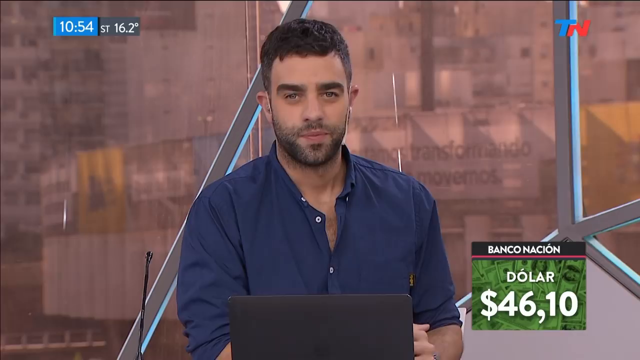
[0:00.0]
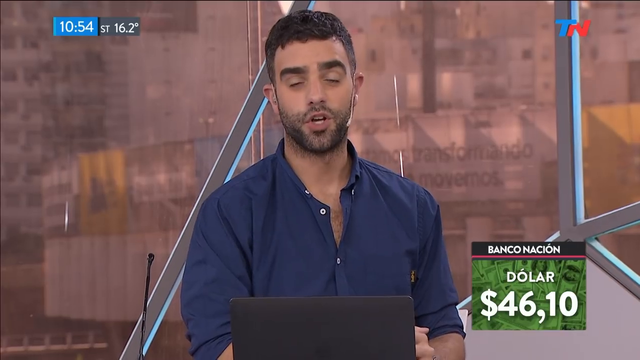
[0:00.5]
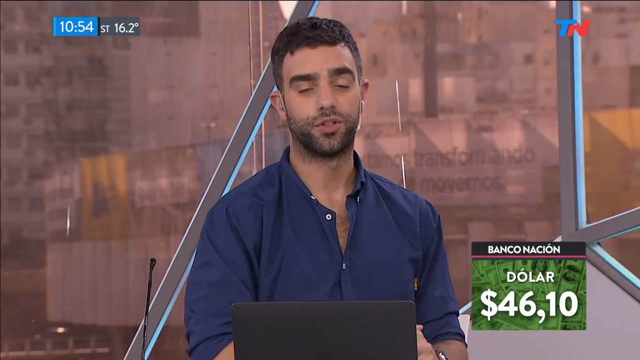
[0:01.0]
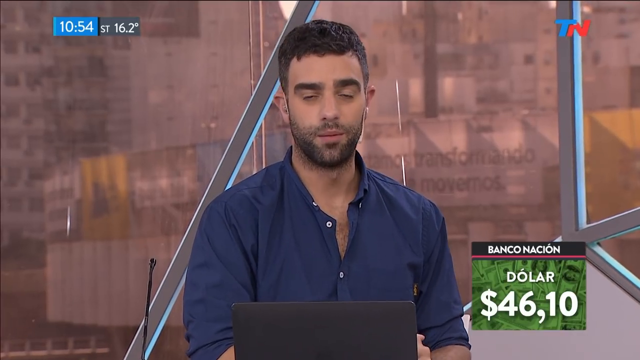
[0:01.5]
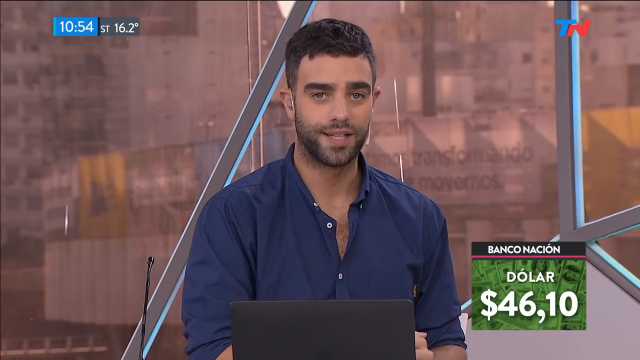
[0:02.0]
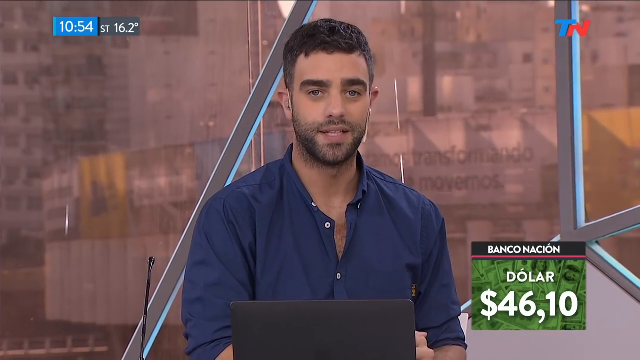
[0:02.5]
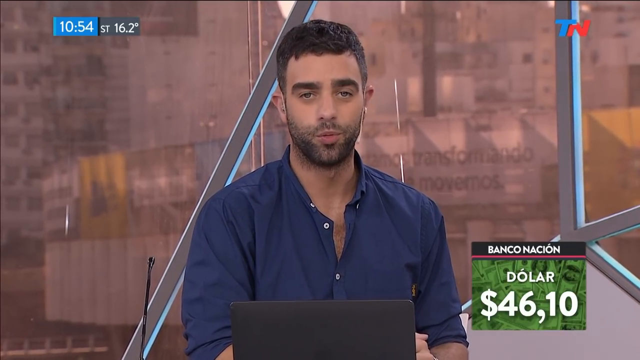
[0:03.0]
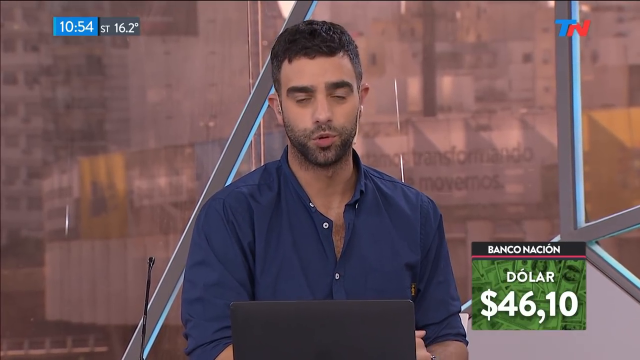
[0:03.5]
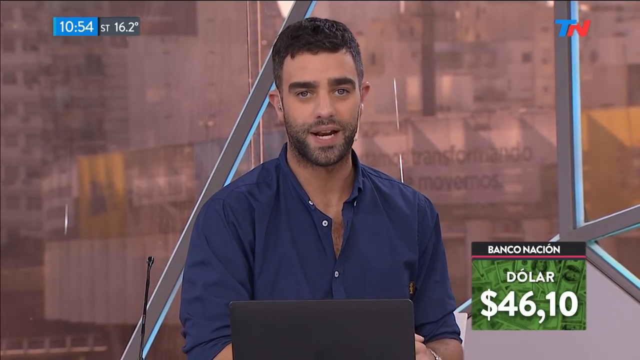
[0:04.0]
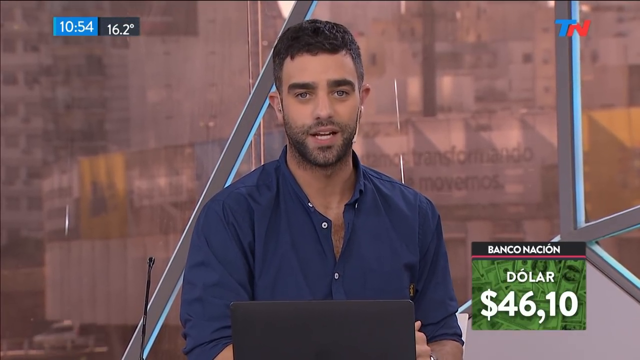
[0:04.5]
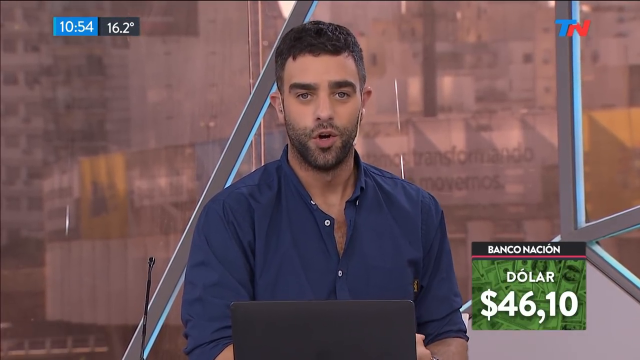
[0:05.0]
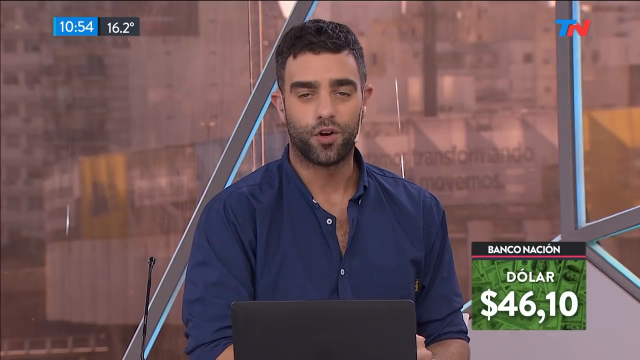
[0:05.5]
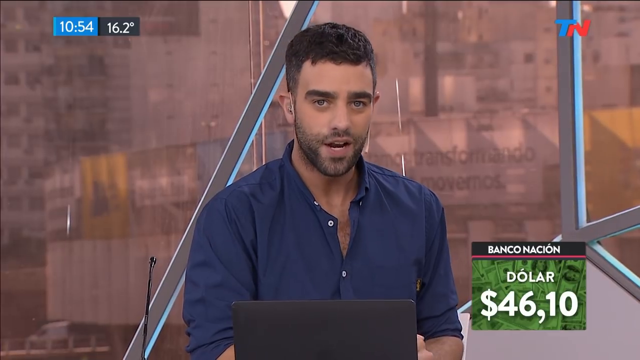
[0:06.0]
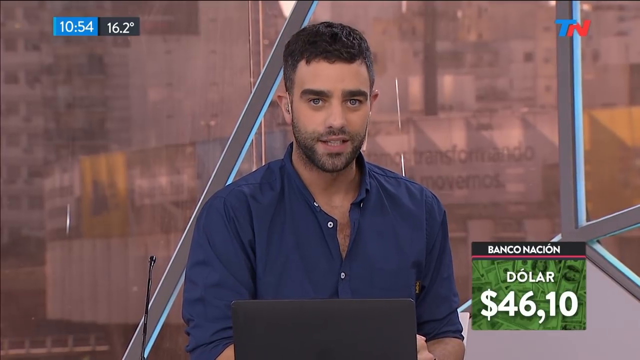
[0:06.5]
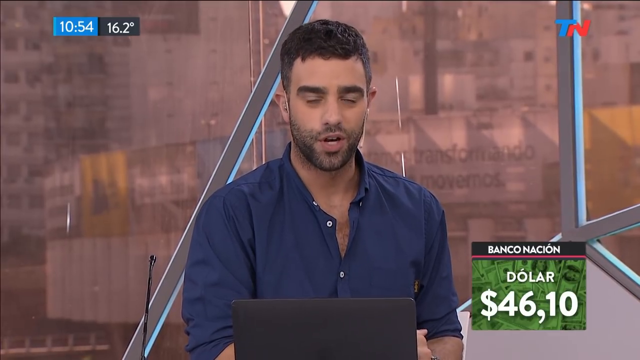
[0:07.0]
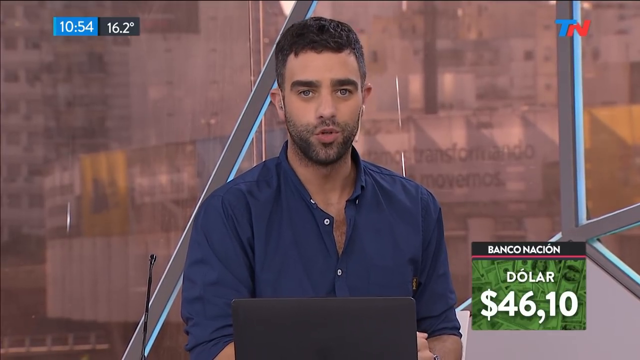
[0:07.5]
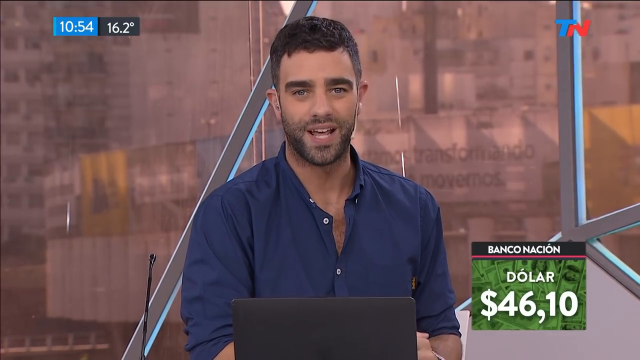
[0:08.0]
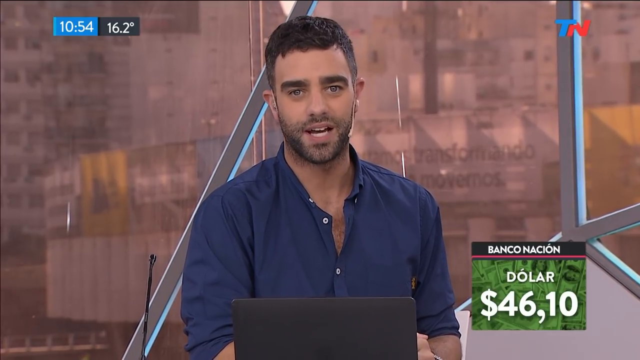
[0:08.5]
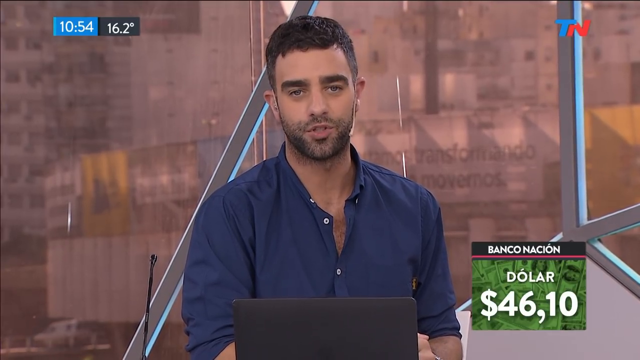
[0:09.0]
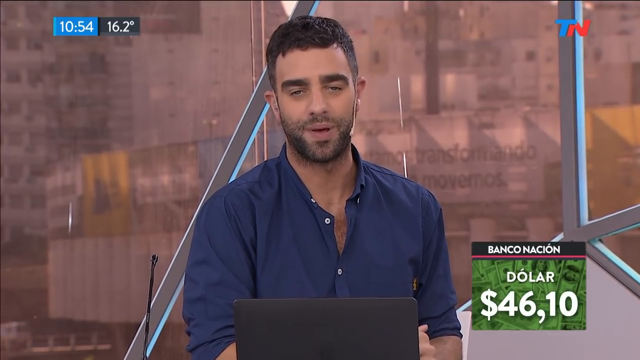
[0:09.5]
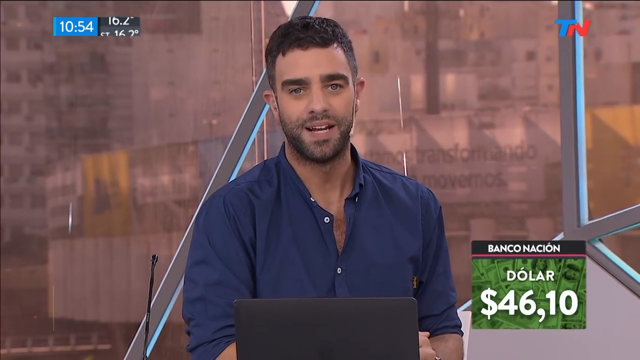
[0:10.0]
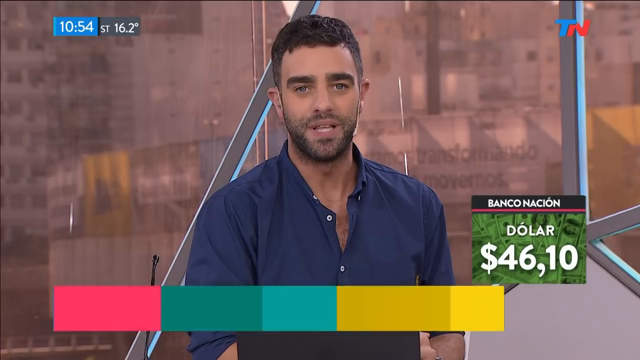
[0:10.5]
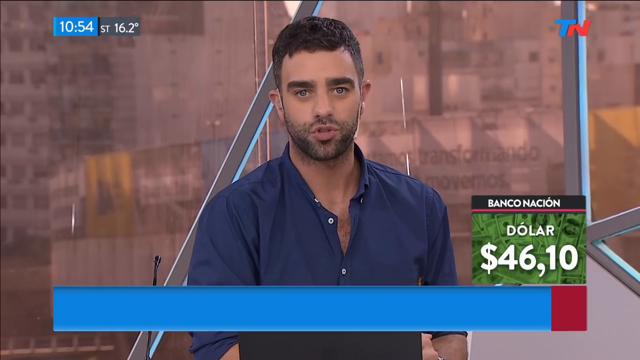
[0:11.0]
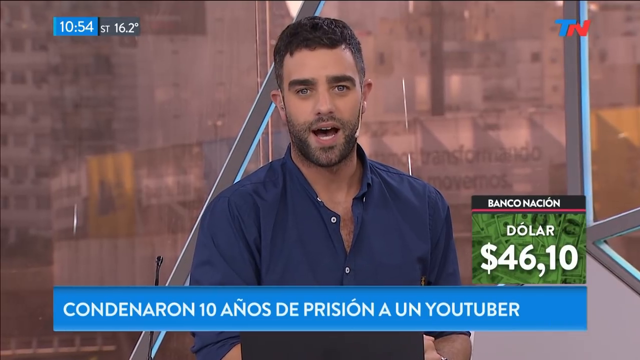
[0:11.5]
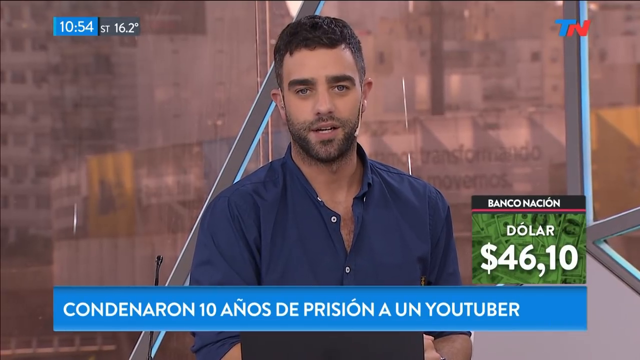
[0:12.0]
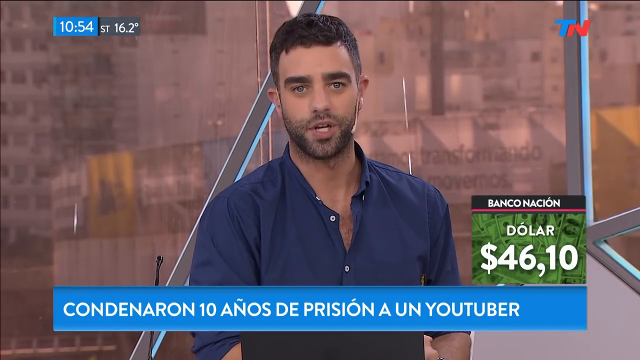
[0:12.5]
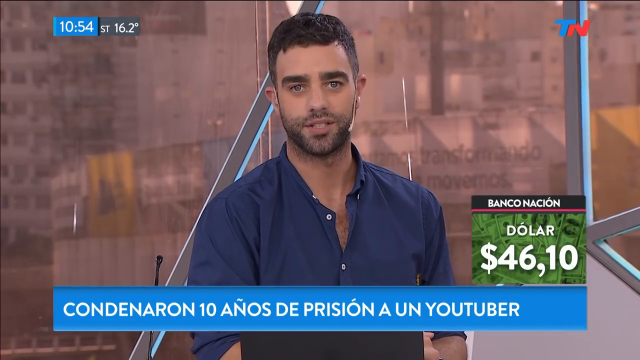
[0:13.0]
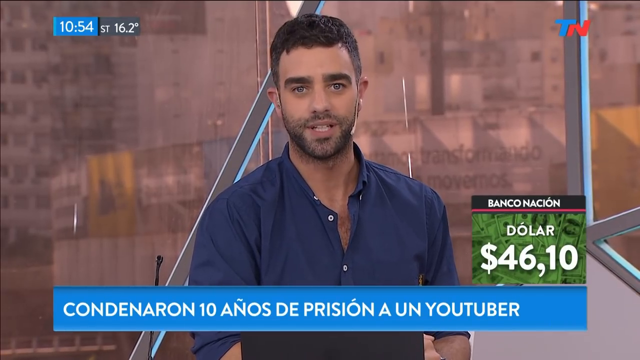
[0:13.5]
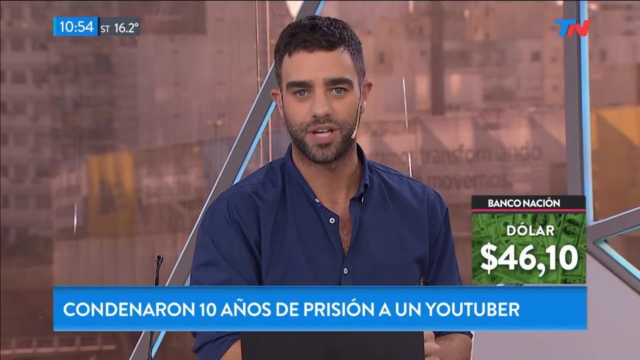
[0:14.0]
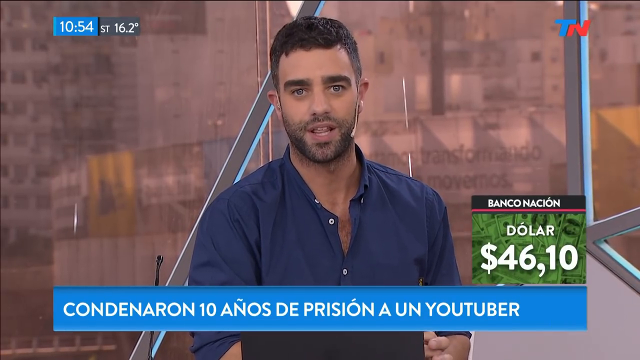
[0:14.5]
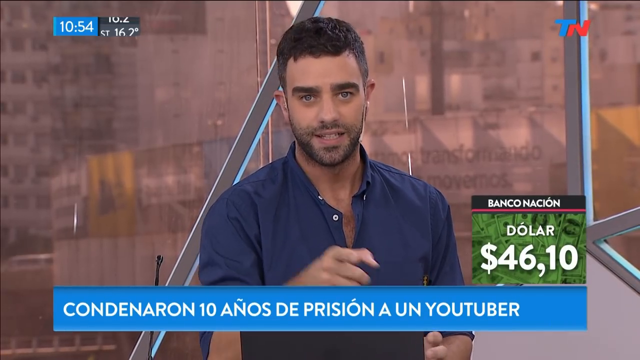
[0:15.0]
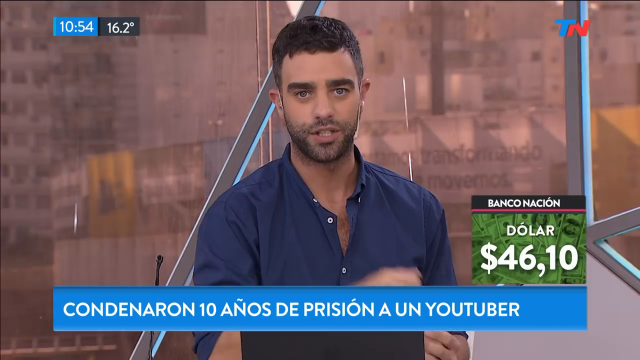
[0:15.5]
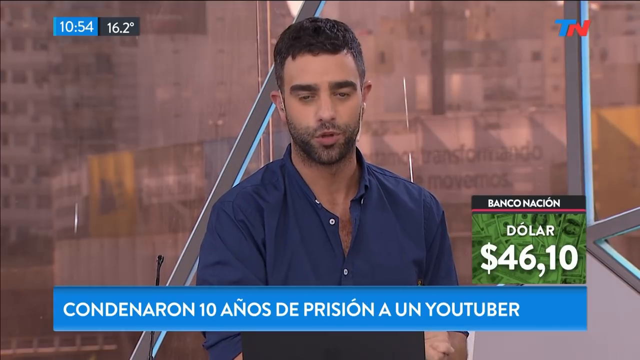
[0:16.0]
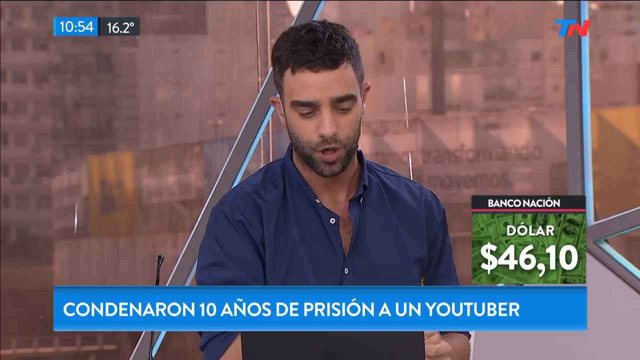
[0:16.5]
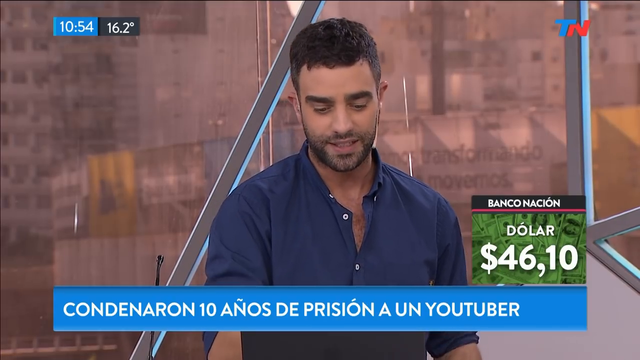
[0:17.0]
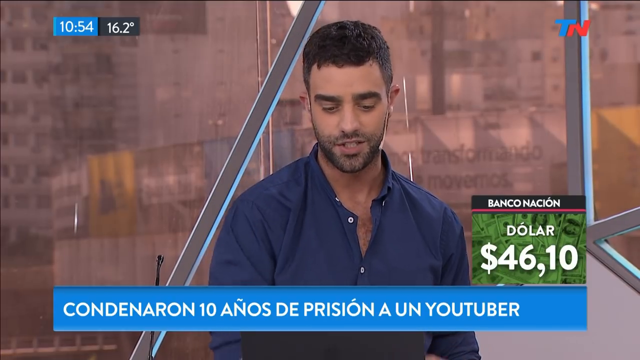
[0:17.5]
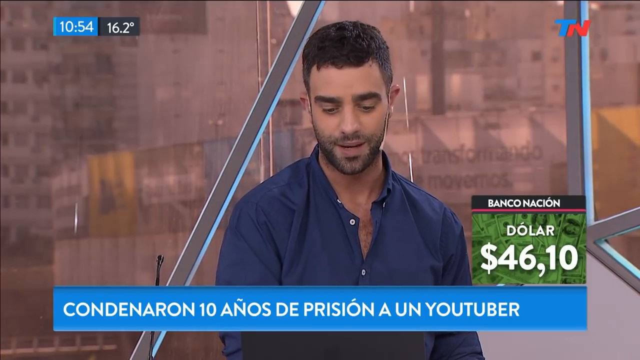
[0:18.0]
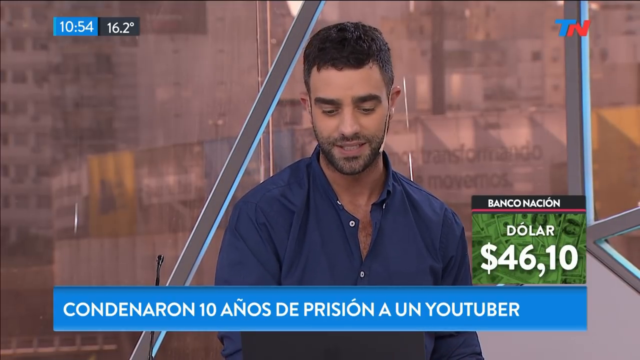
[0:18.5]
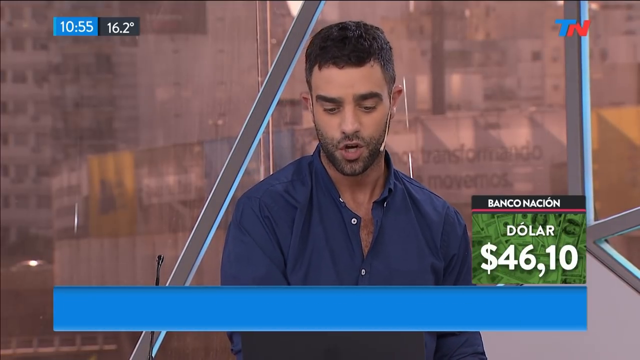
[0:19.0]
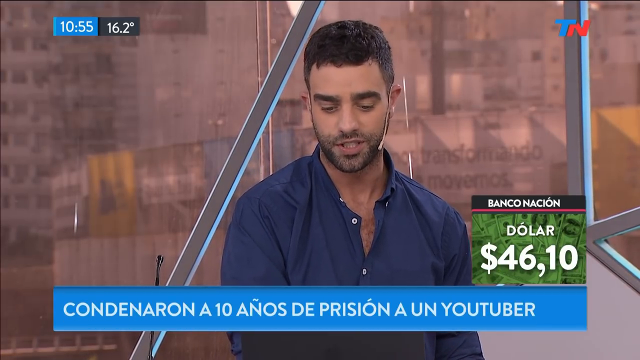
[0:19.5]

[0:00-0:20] A man appears on a news broadcast, sitting in a news studio and talking directly to the camera. He has short brown hair and a scruffy beard and mustache, and wears a dark blue button-up shirt with white buttons. A microphone wraps around his ear and comes around to the side of his cheek. He sits at a desk with a laptop open in front of him but looks directly at the camera as he talks. Behind him is a large window, and there appears to be a city scene outside. In the lower right corner the screen reads "Banco Nacional dollar, $46.10." In the upper left corner the time is 10:54, with "ST 16.2 degrees." A TN logo is in the upper right corner, with a blue T and a red N. Spanish text runs along the bottom of the screen; the last word on its first line is "YouTuber," and another word in it is "prison," so the story is possibly about a YouTuber sentenced to prison.